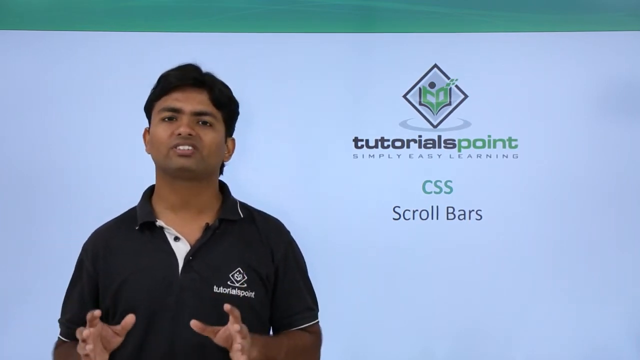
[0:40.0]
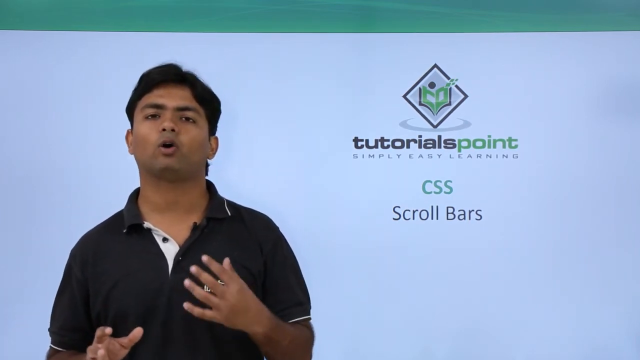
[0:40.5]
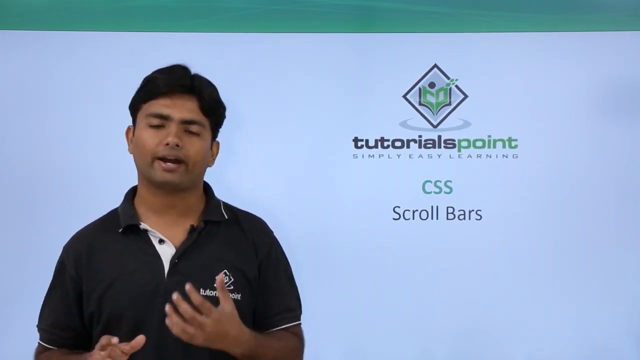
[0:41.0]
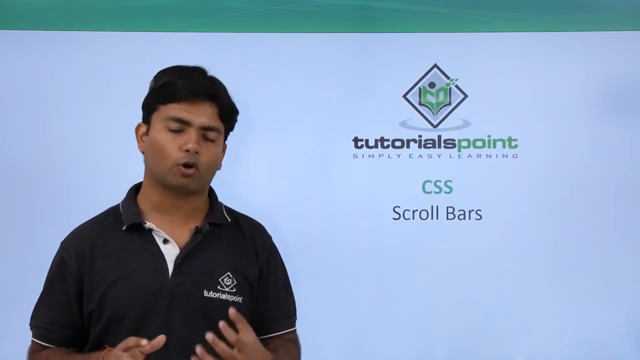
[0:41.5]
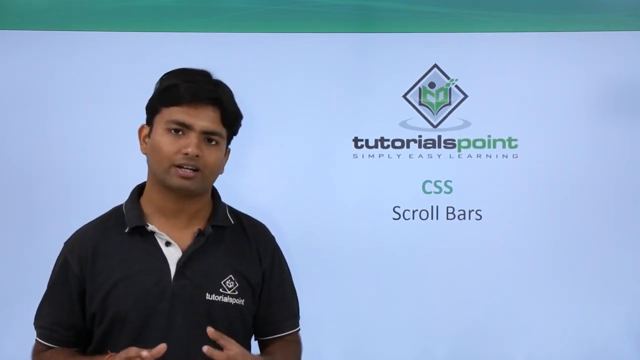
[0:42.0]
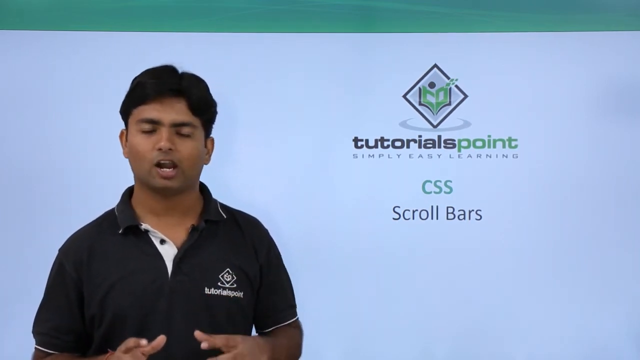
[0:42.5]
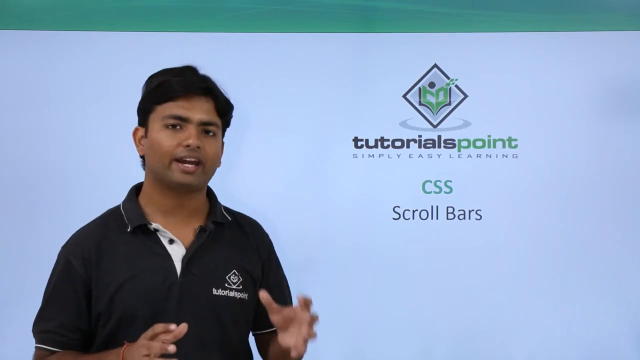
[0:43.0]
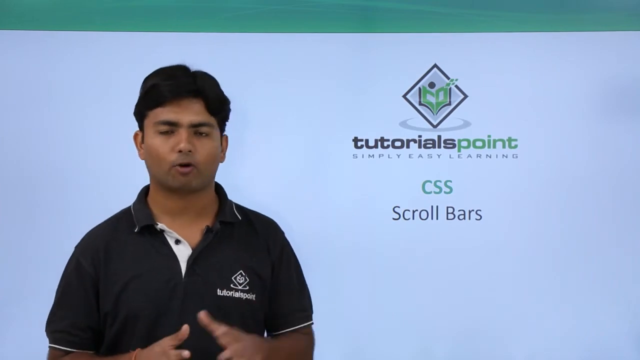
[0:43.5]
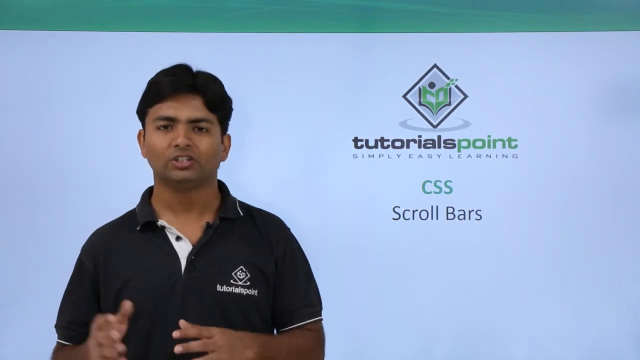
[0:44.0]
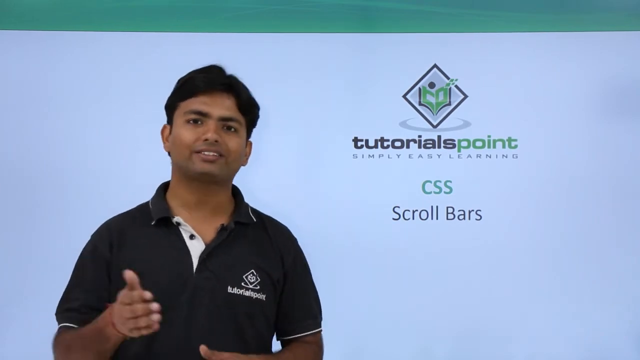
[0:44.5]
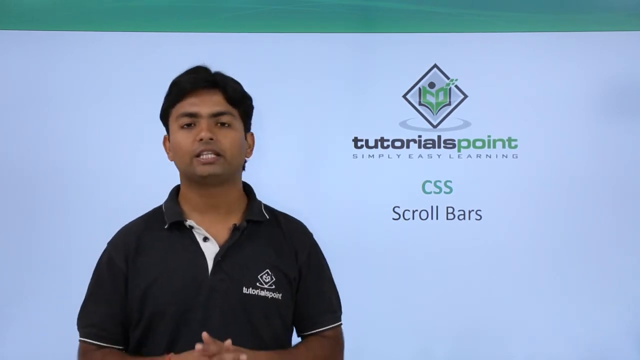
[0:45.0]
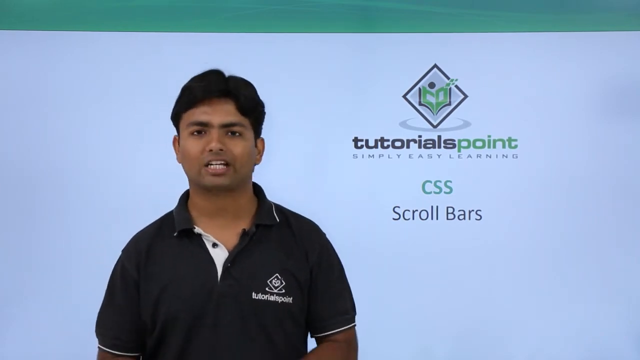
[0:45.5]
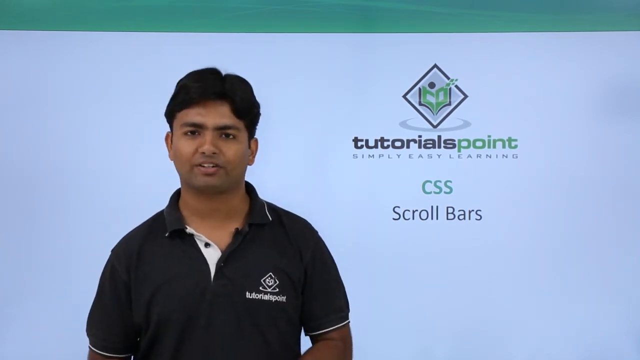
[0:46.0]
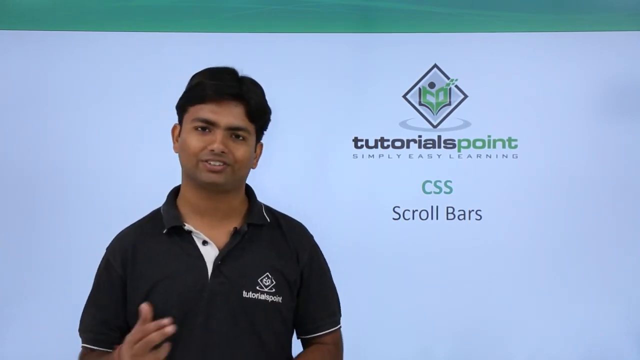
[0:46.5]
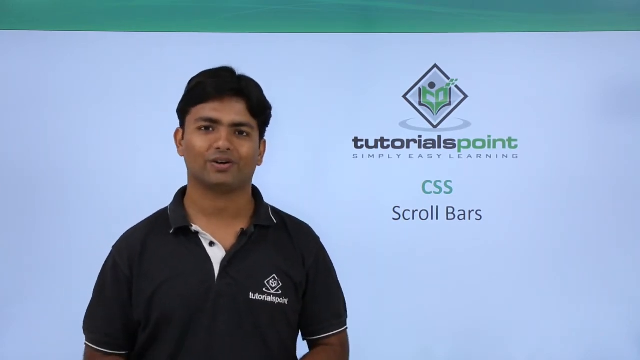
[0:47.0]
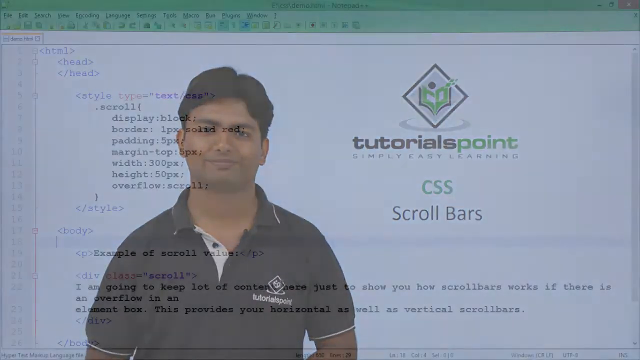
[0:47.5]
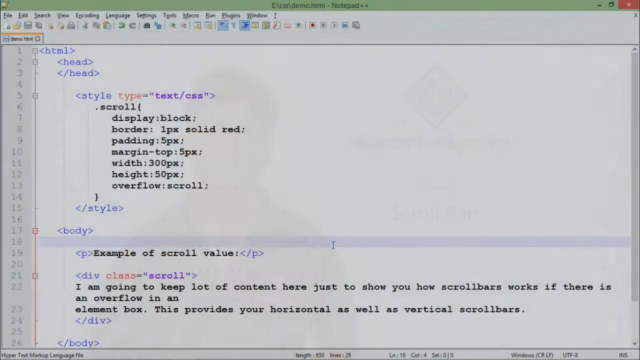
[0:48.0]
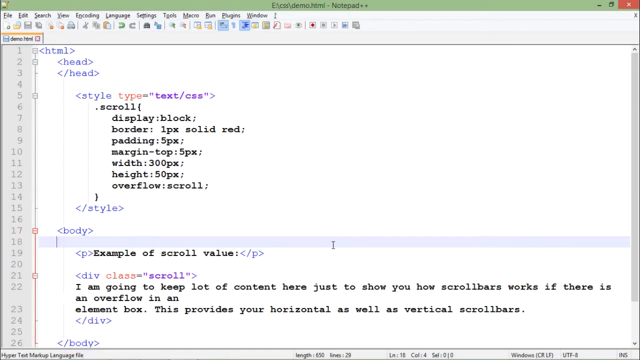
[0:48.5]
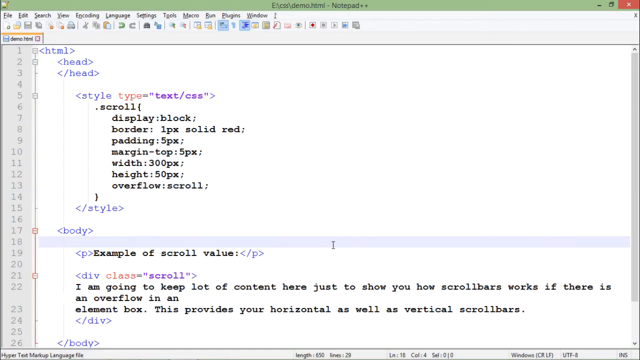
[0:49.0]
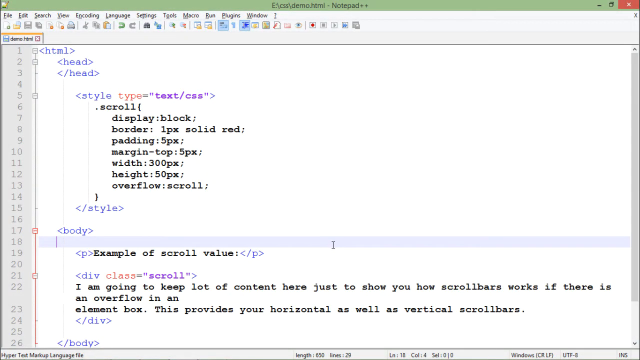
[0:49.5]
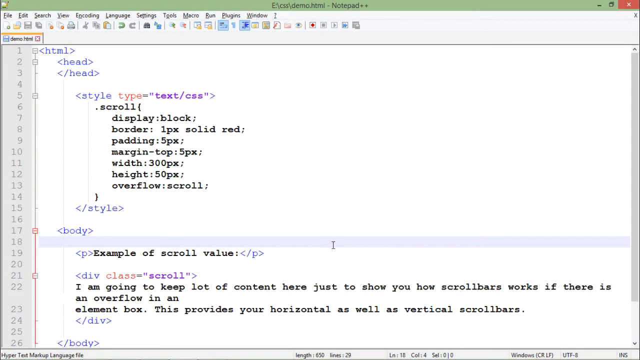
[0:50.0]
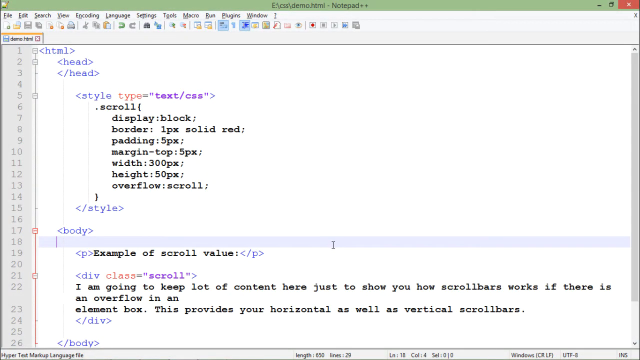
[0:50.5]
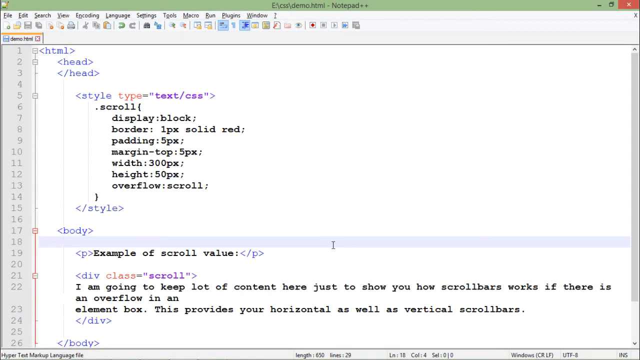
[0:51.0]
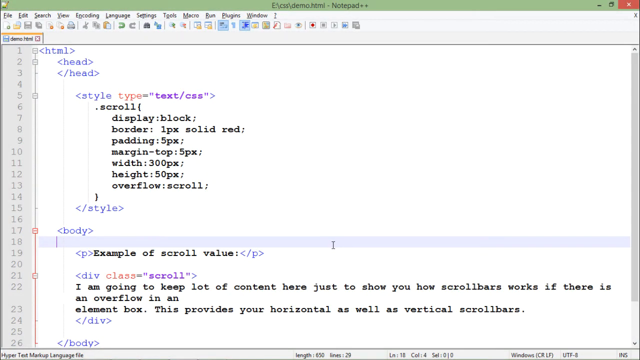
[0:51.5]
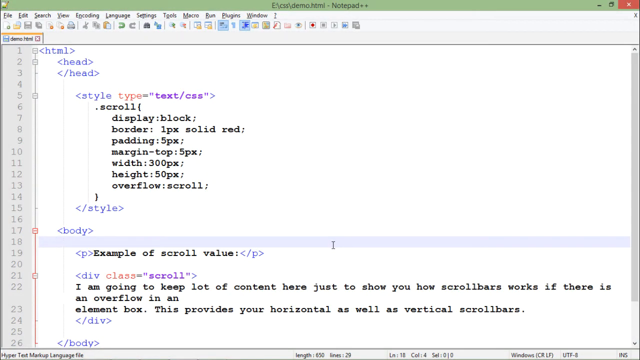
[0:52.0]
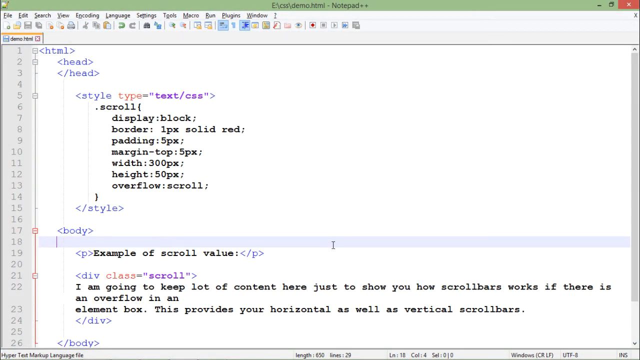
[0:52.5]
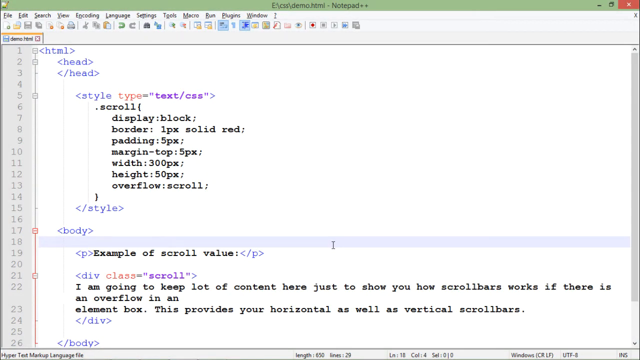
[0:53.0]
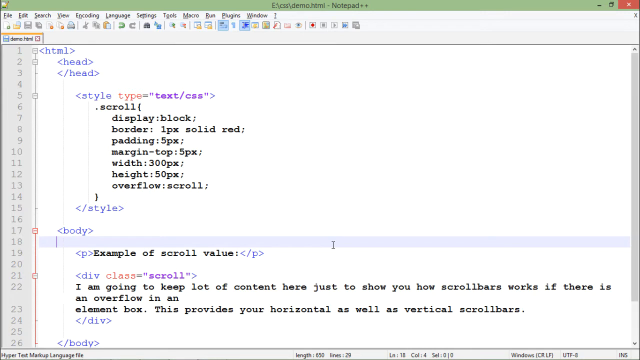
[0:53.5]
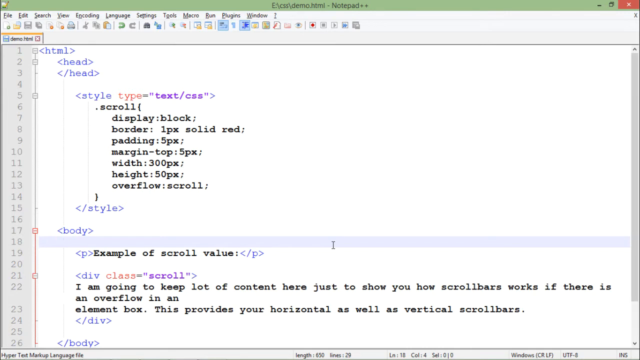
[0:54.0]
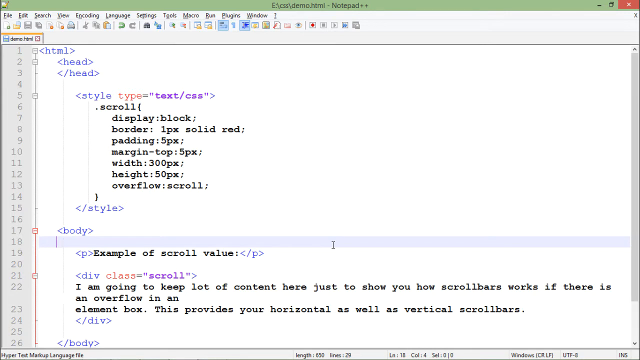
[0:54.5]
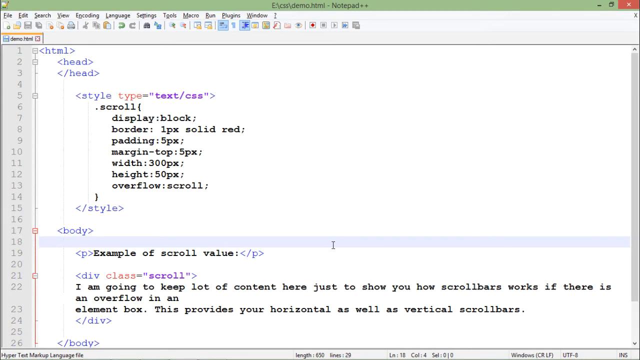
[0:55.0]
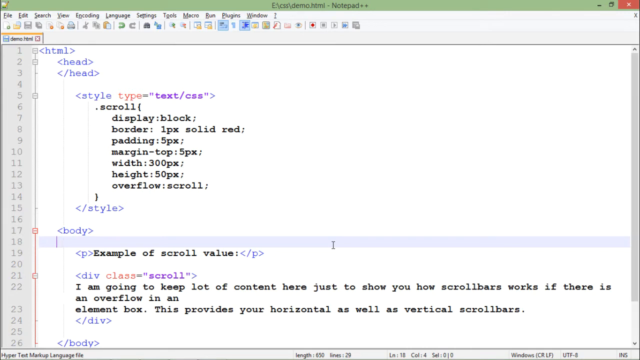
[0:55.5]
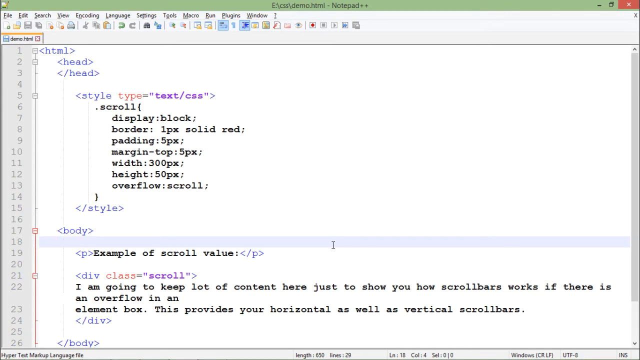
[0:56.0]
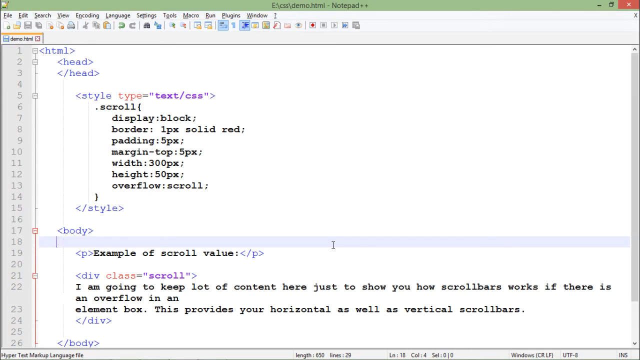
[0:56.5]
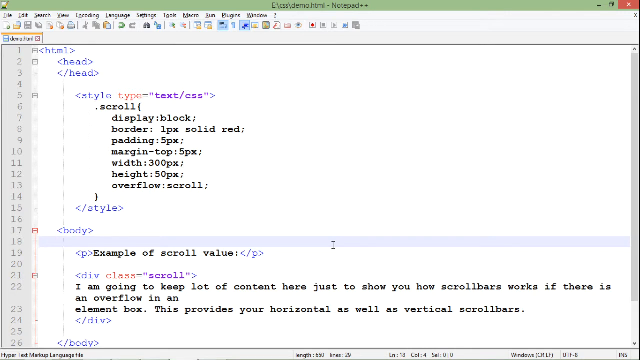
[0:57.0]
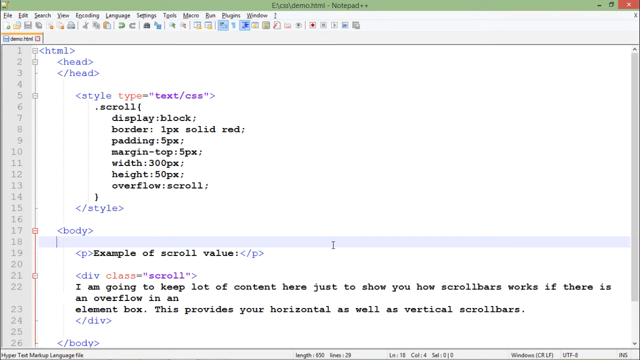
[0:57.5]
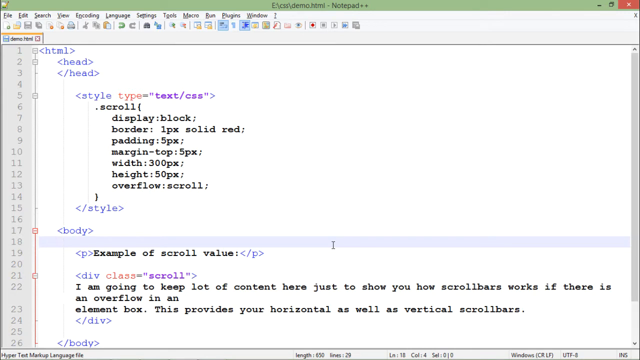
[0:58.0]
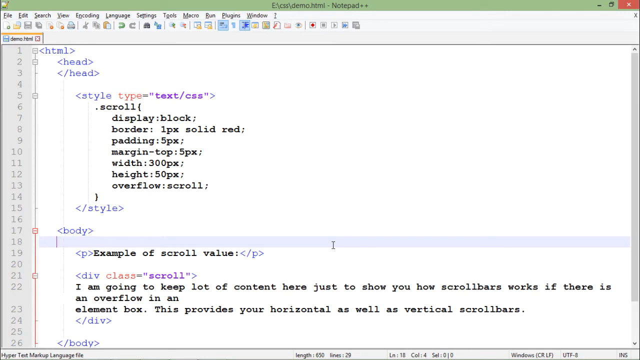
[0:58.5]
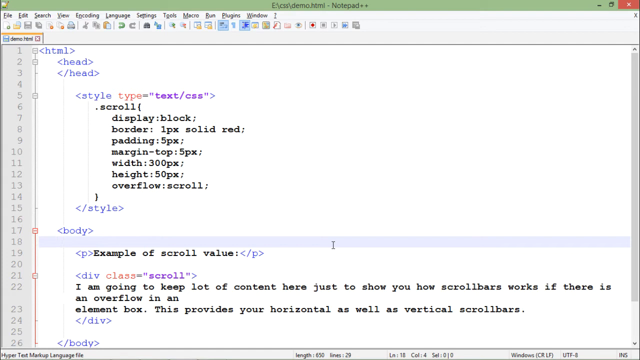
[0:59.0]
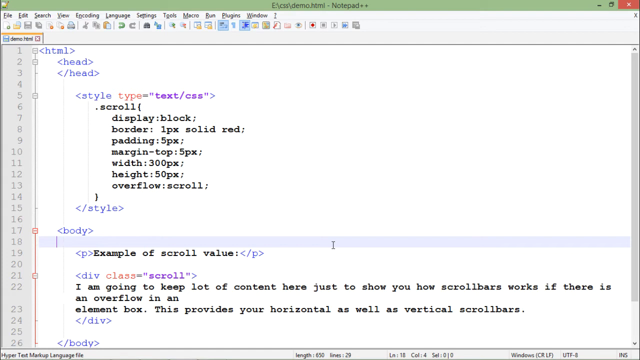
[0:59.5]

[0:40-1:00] The young man in the black short-sleeve polo shirt speaks to the camera. He looks to be of Indian descent and has short black hair. On the screen behind him, to the right side, is the Tutorials Point logo, with the tagline "Simply Easy Learning" underneath. Below that is green text that says "CSS", and beneath that black text that says "scrollbars". The screen then changes to an open Notepad++ document showing HTML text. At the top is an empty pair of header tags, with style tags underneath containing some CSS code, and below that body tags with some text in paragraph and div tags. The line selector is on line 18, where a black vertical line blinks at the beginning of the line.